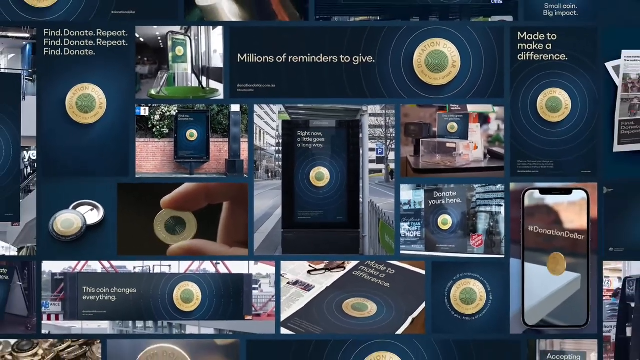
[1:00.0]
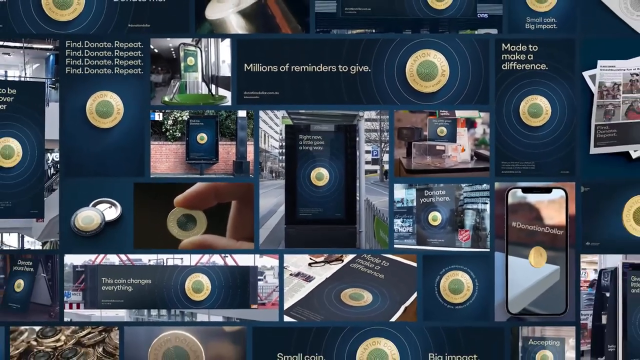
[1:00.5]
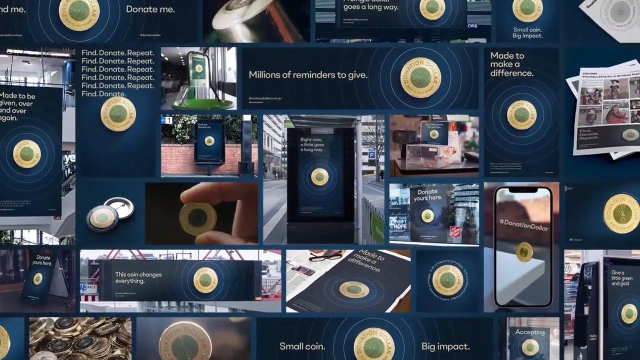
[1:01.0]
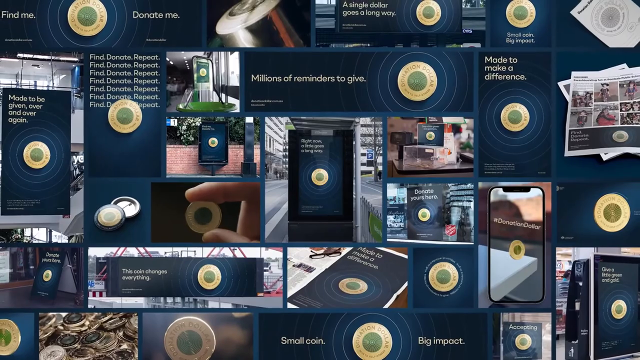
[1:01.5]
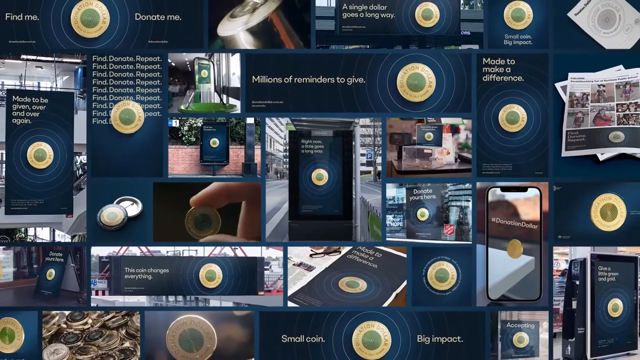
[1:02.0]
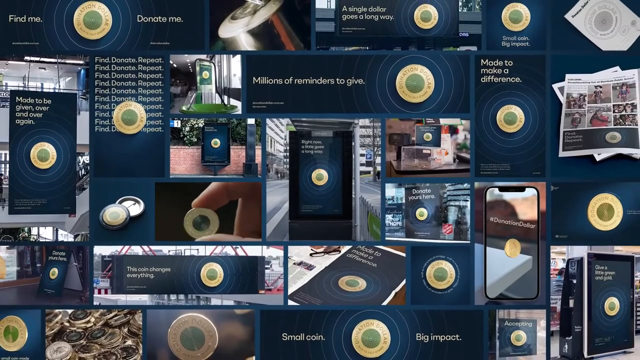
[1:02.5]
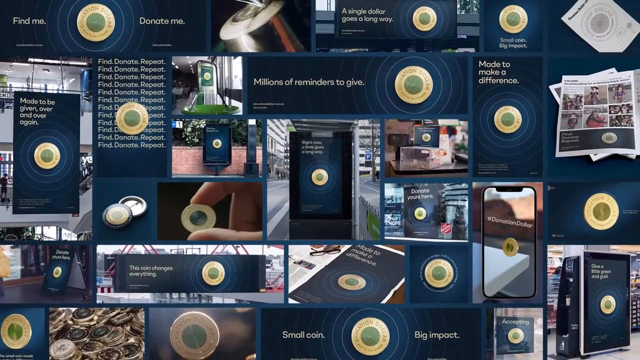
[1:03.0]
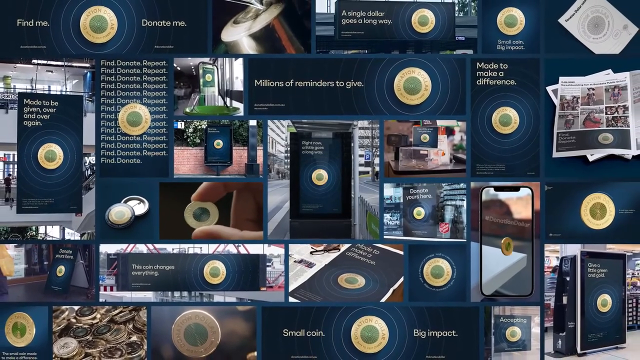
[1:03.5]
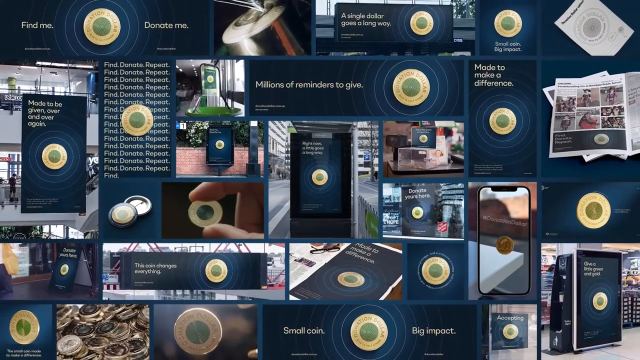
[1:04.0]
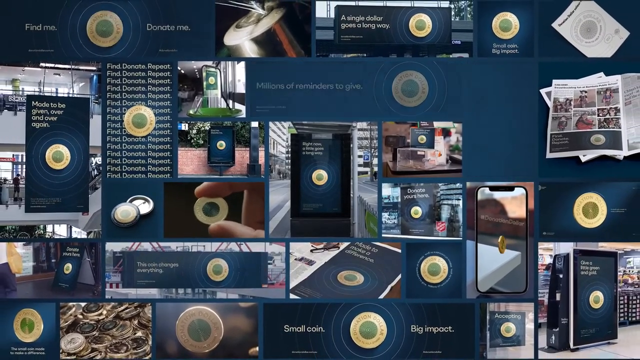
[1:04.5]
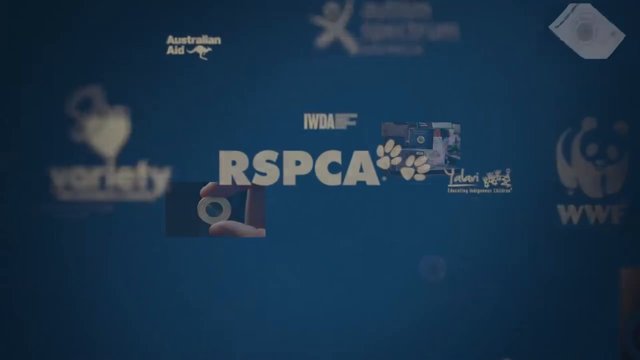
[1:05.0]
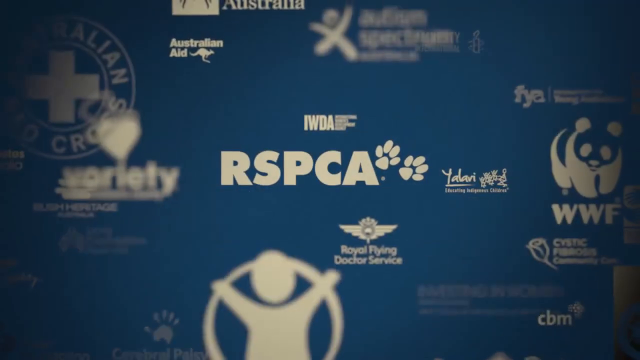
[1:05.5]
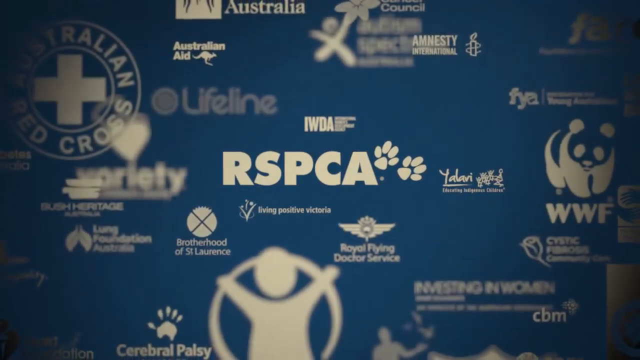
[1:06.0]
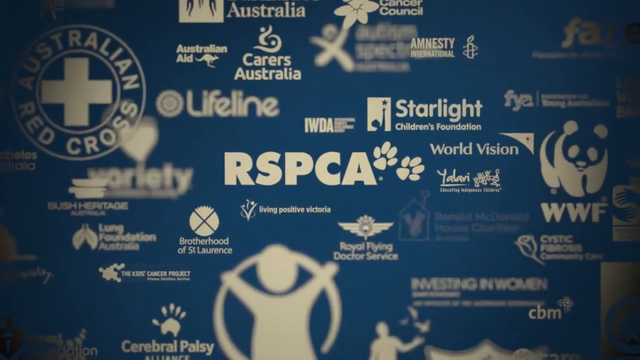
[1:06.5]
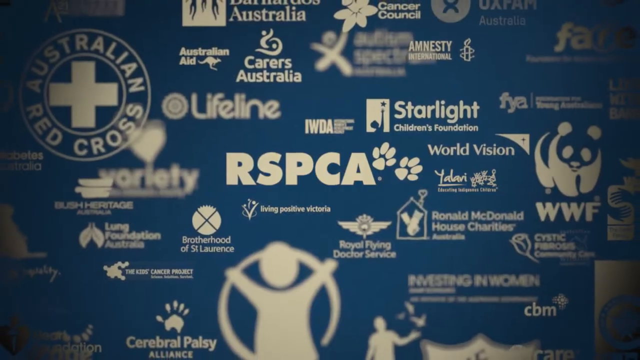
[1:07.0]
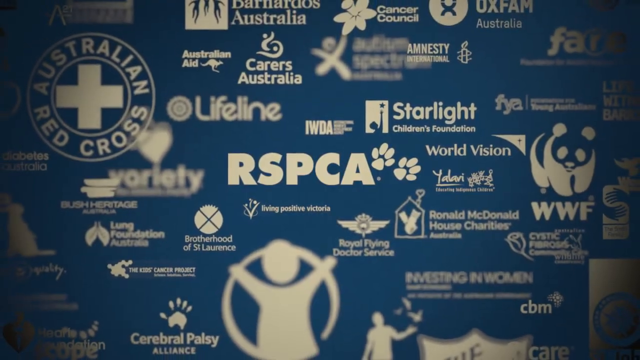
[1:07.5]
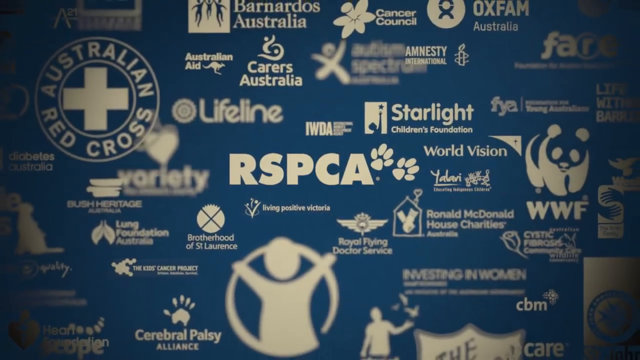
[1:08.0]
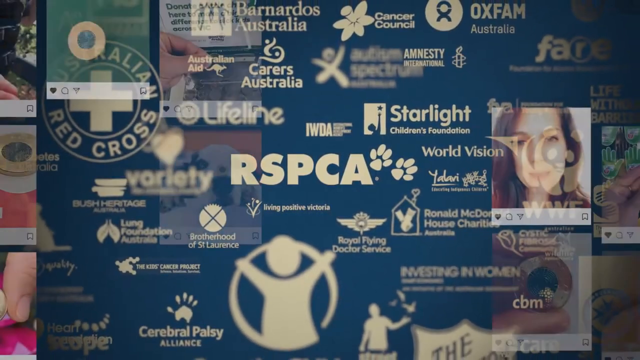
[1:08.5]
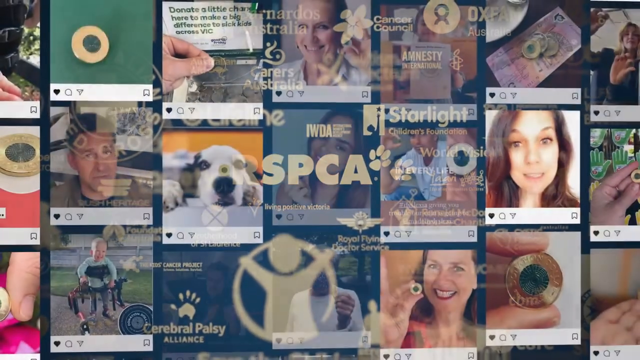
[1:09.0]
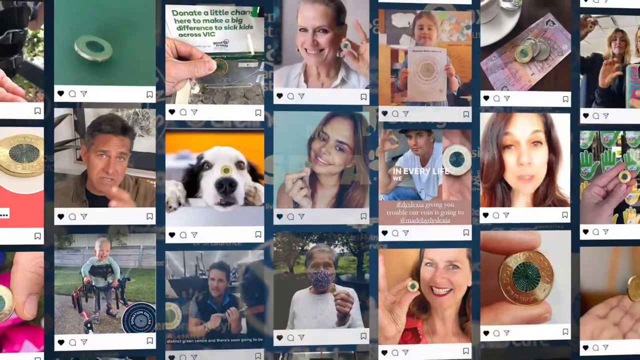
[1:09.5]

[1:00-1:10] A series of what looks like advertisements, all very similar, appears: navy blue screens with yellow words and the donation dollar coin in the middle. One says "made to make a difference," one says "donate me," one says "millions of reminders to give," one repeats "find, donate, repeat" over and over, and one says "the coin changes everything." Another is a picture of a phone showing "#donation dollar" with a coin sitting on the edge of a table, and another is a picture of someone holding the coin between two fingers. One looks like an advertisement in a book, one looks like a subway advertisement, and one looks like it is on the street. A navy blue poster then shows what are probably the different organizations sponsoring it, including the RSPCA, the WWF and the Australian Red Cross, among many more. The view zooms out and shows people probably talking about it.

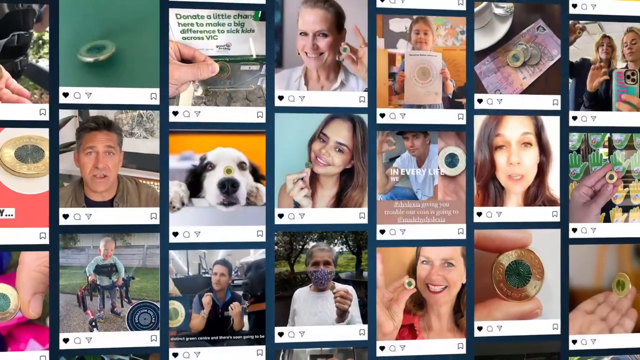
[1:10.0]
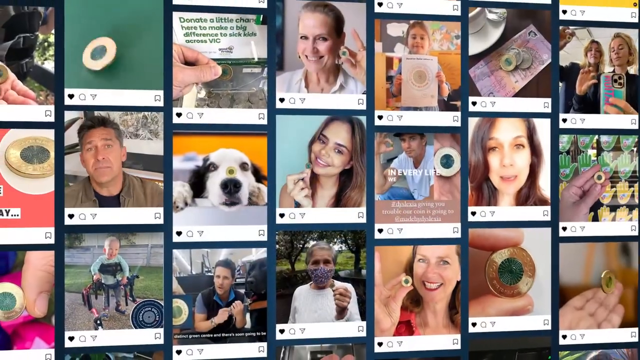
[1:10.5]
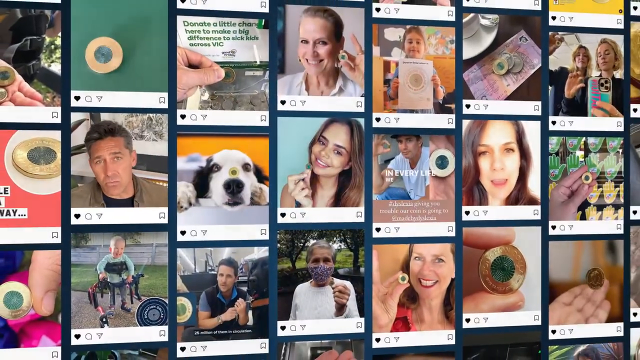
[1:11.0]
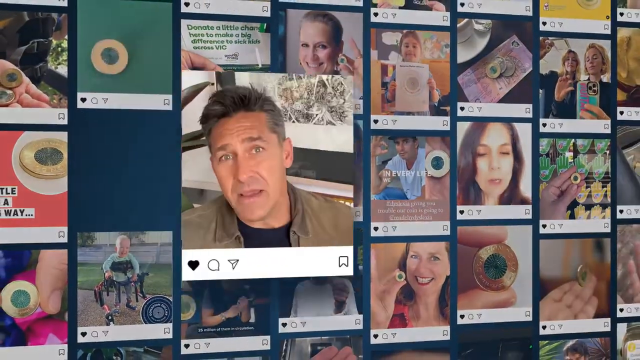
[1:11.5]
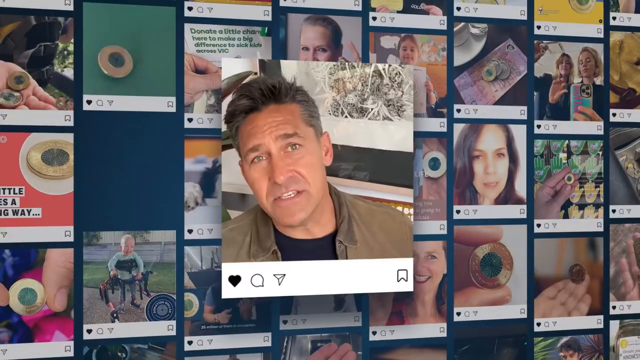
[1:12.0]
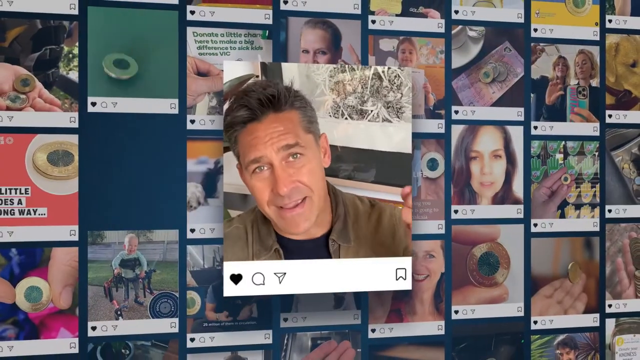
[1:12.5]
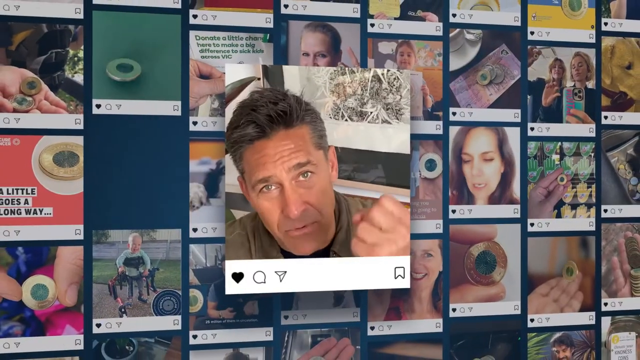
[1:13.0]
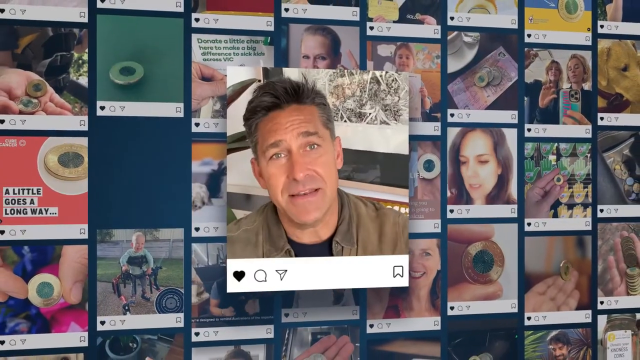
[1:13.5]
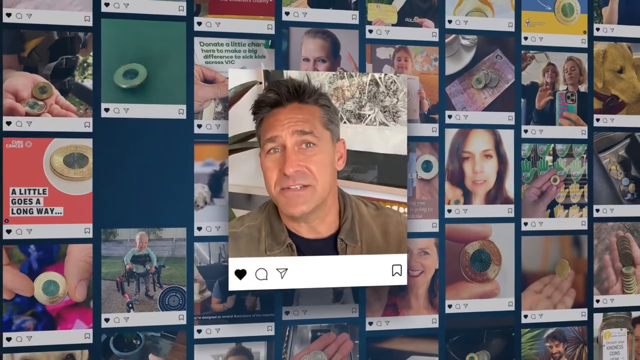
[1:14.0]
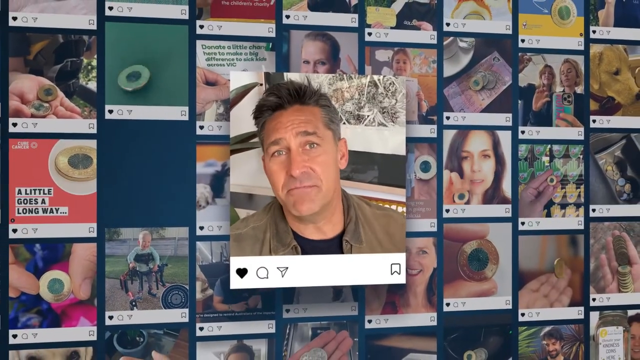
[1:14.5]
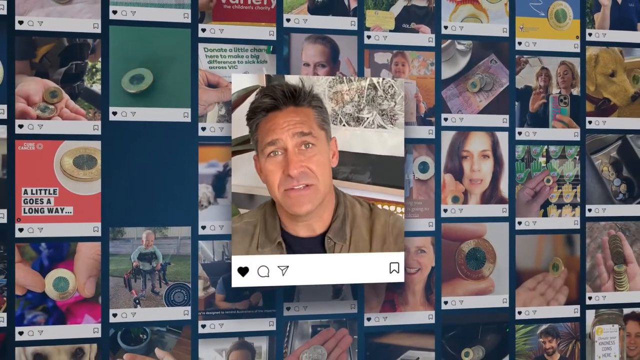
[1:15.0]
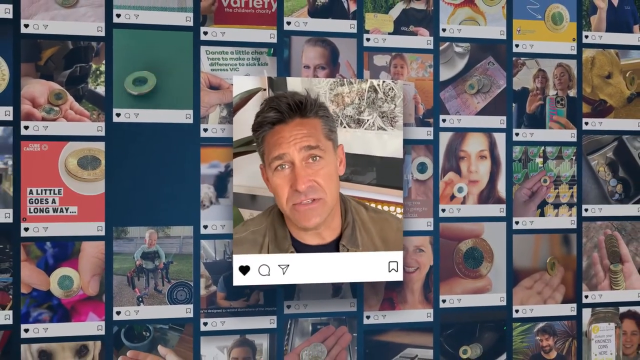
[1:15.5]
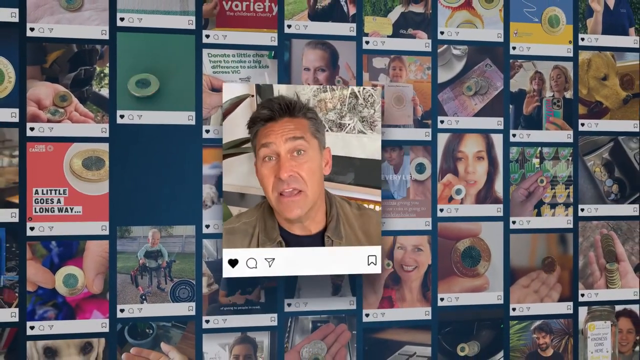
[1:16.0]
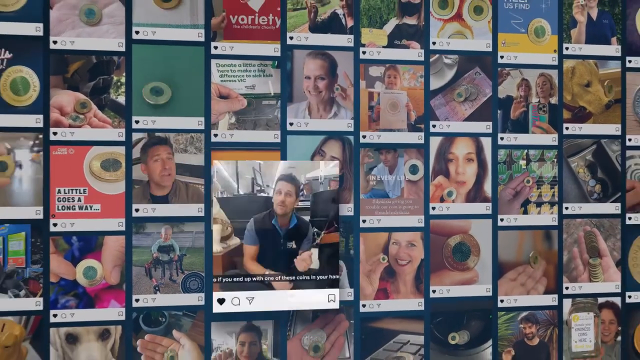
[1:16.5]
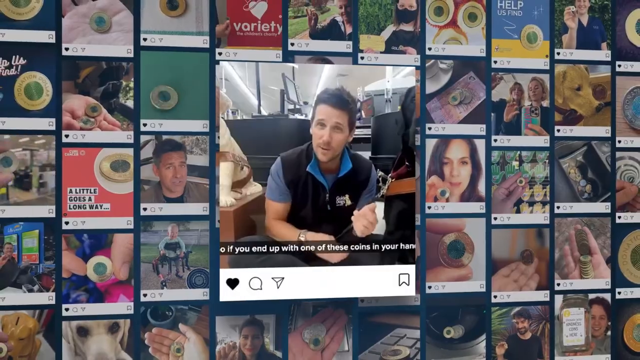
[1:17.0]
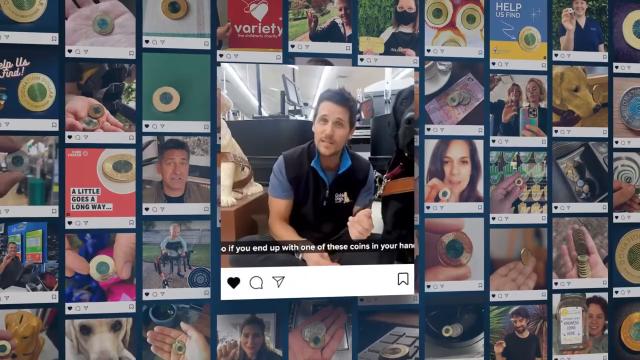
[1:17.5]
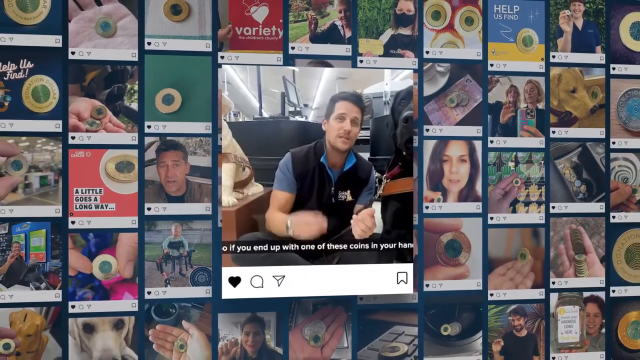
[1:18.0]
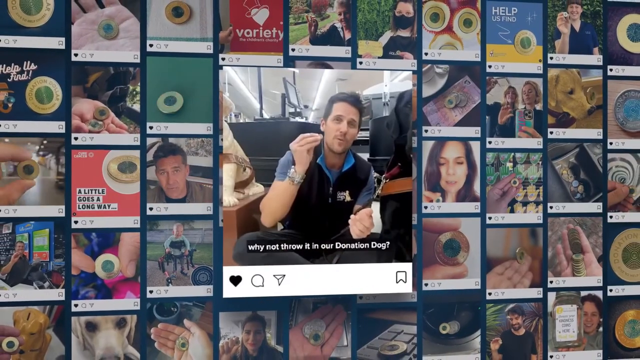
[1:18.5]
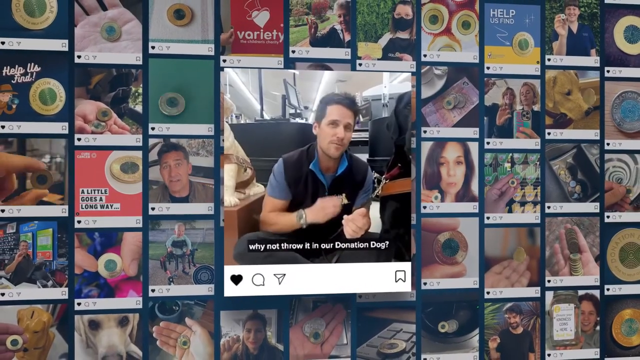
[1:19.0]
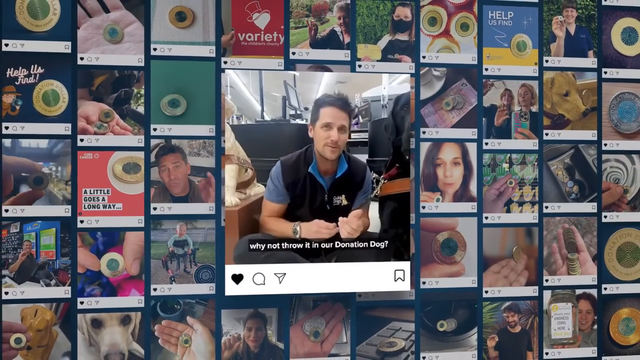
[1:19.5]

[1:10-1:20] Various screens appear, probably small videos that look like they are from Instagram. Each has the video with a heart, what looks like a speech bubble and a paper-airplane share arrow at the bottom, and a bookmark on the left; there are no features identifying which social media platform it is. All the videos are in moving boxes, and the view seems to zoom in on one in the middle, which is made larger than the others. One shows a man in a blue shirt and a black vest speaking, with a caption beginning "why not throw it in our donation." The view then zooms out, showing videos of the phone falling on a desk and moving, a lady holding up a coin, a coin moving on a picture of a dog or on a picture of a hand, and an older man who seems to be making a passionate speech.